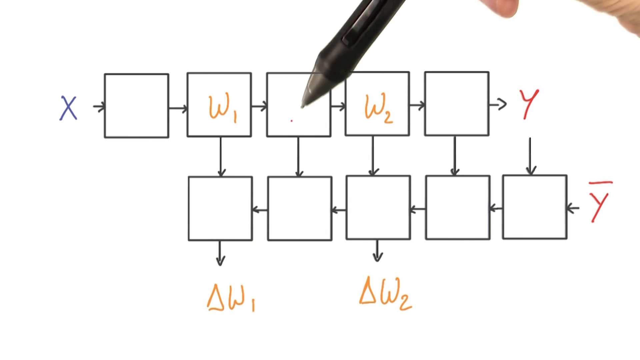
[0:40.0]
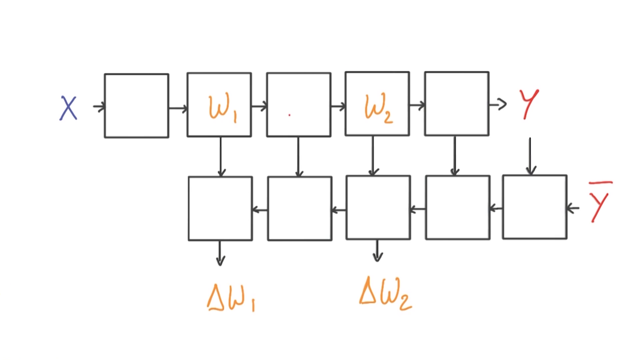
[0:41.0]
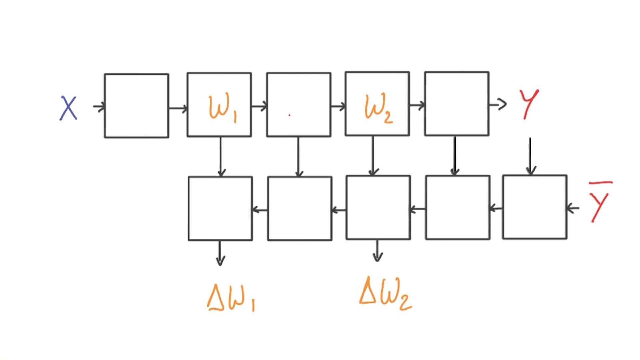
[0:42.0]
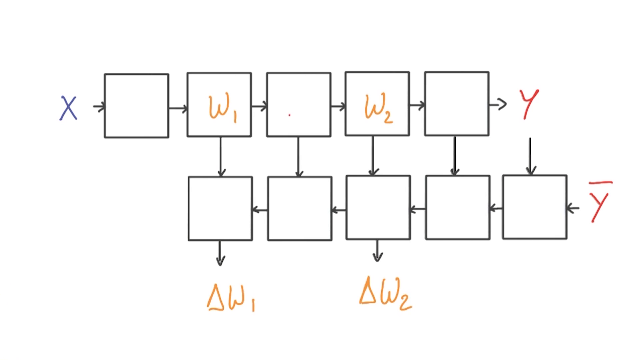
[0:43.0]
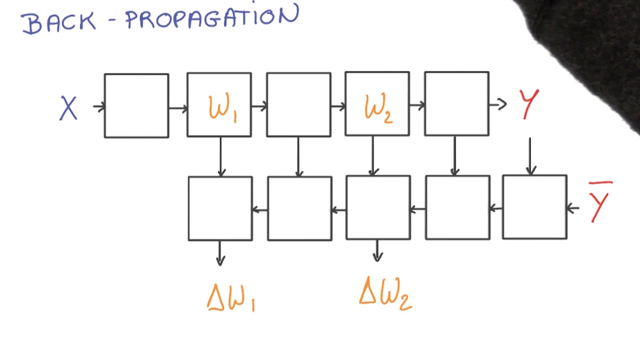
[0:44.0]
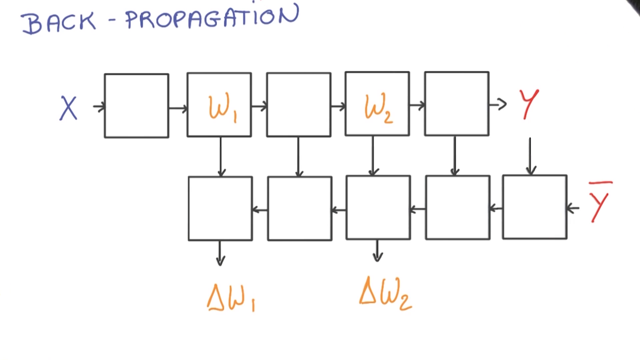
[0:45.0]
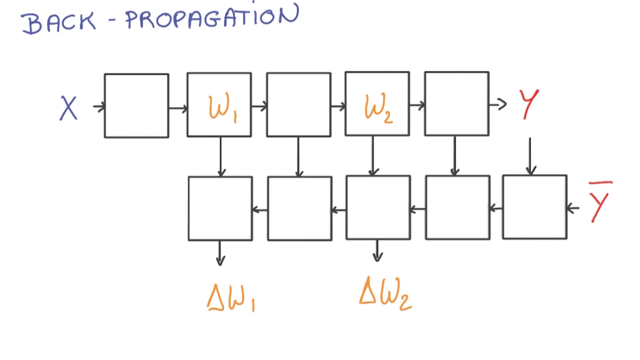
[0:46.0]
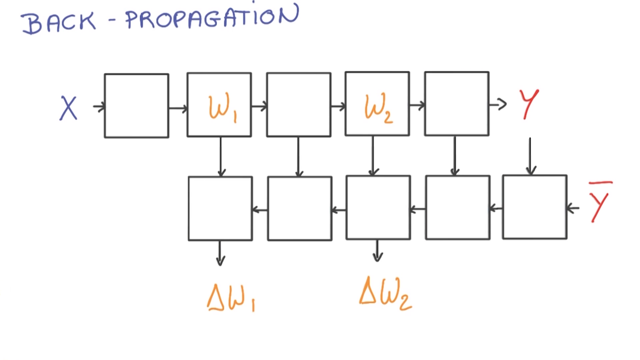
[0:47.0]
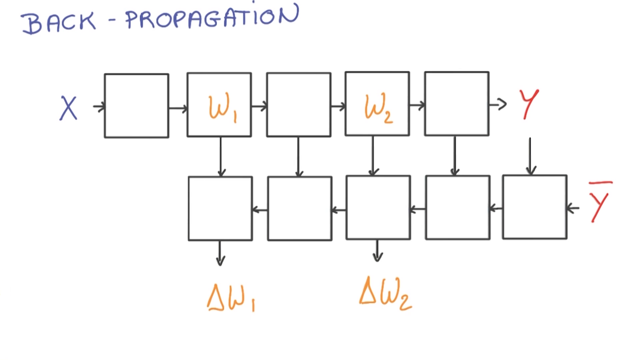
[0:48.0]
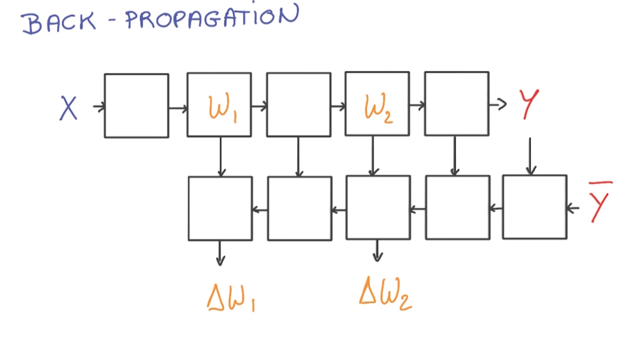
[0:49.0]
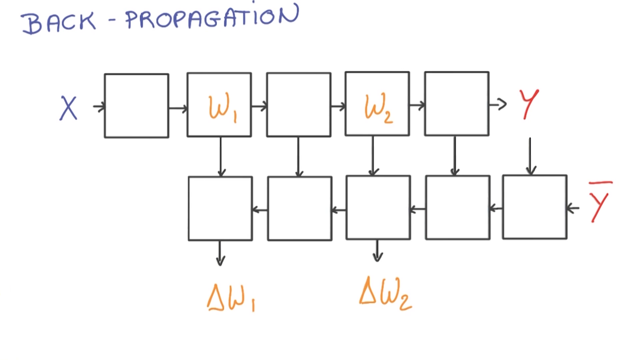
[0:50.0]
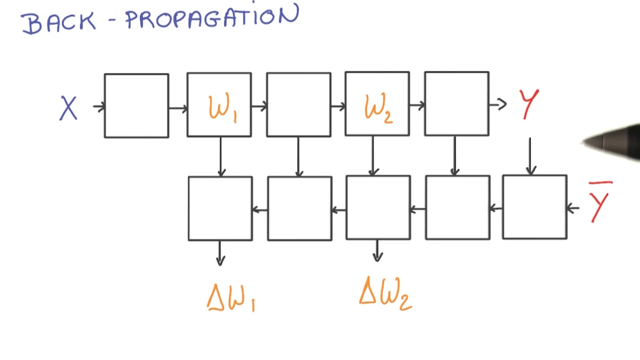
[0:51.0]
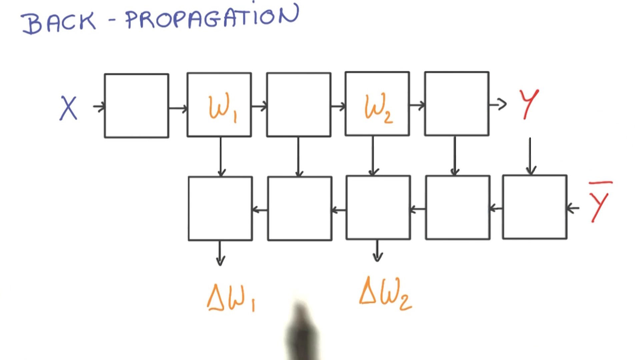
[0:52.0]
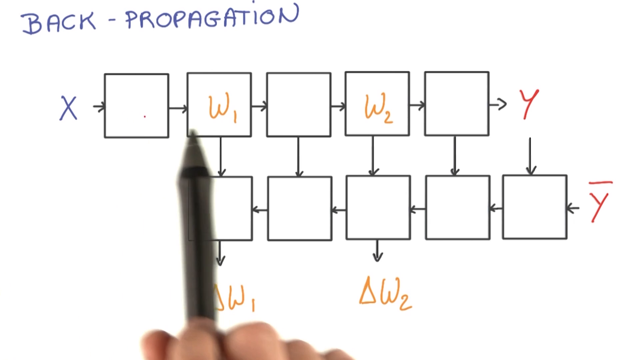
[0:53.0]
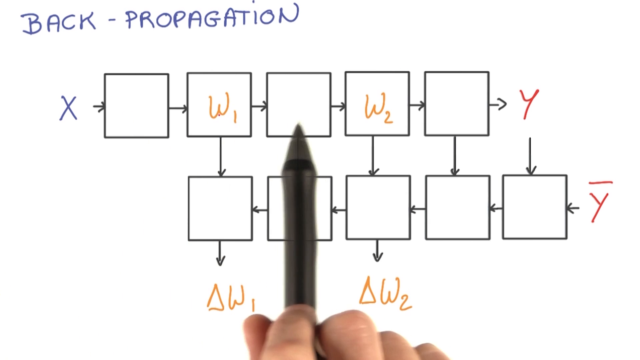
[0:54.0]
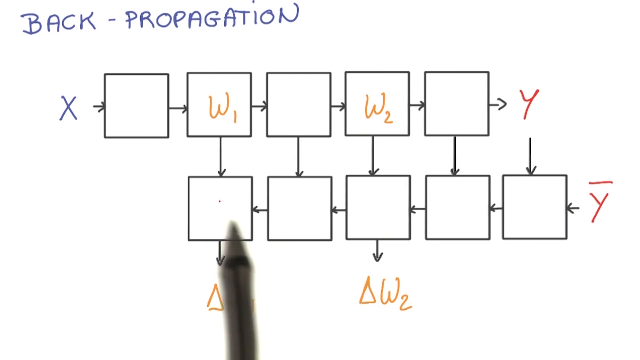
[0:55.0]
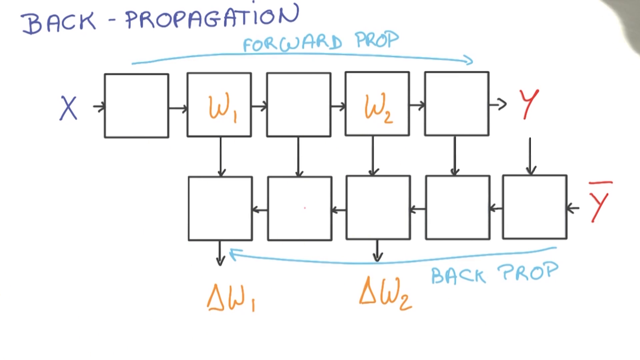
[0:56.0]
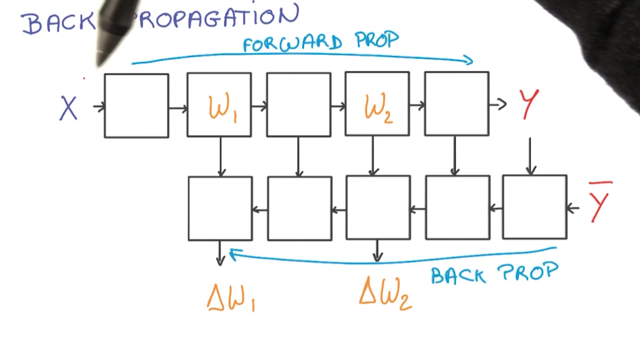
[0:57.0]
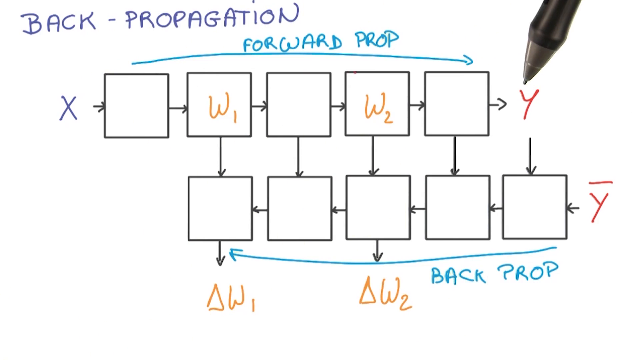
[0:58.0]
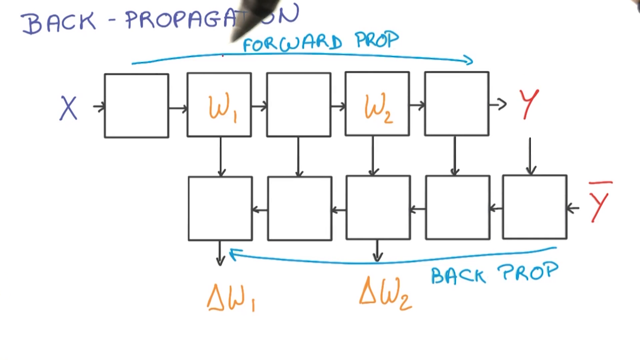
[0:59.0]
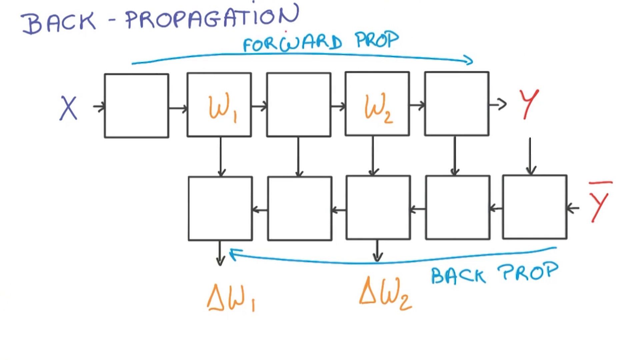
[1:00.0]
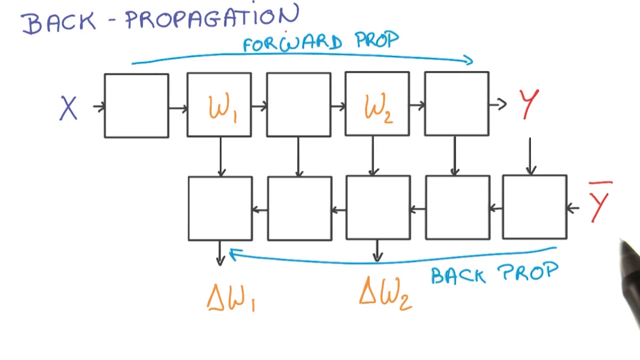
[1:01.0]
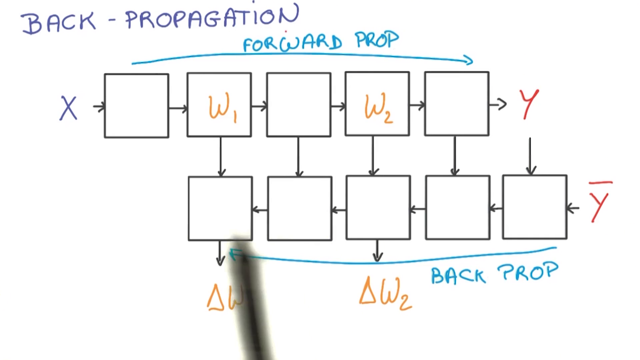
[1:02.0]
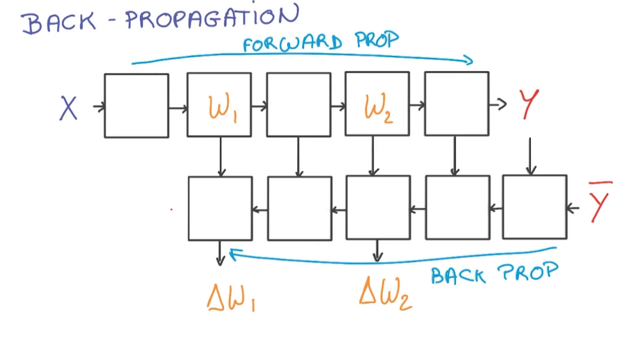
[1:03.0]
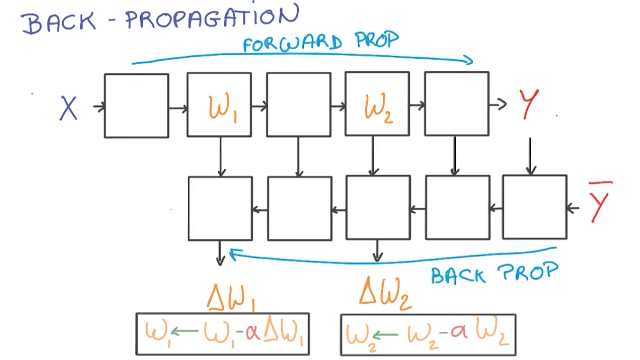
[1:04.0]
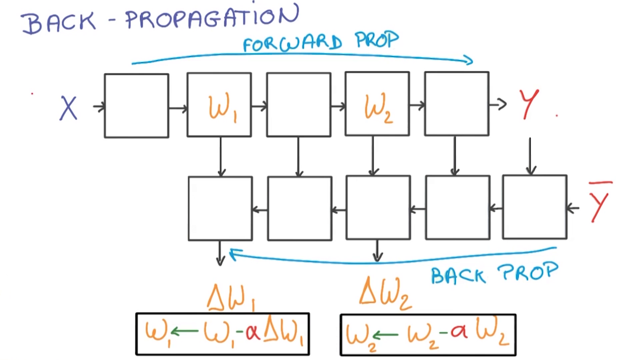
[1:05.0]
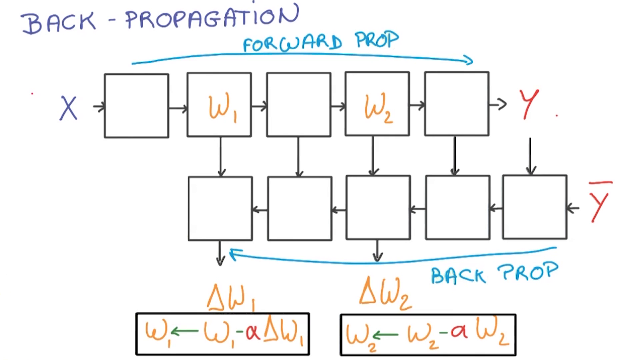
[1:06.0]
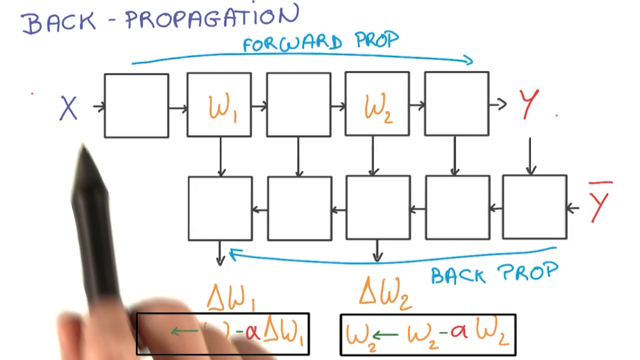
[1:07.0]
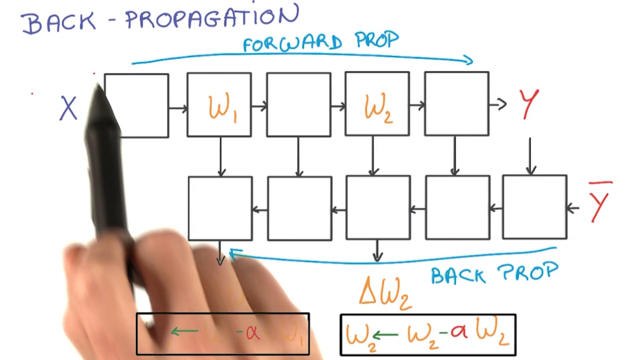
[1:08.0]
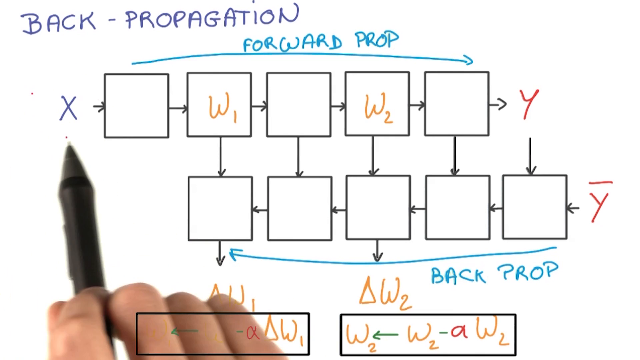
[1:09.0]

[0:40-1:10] The same drawing remains on screen as the hand of the person behind the camera moves. Text in blue letters is added in the upper left corner of the screen, reading "back propagation". The person shows where the information in the blocks goes and in what order, labeling the processes by name: forward prop, going from X to Y along the upper side, and back prop, going from the Y negative toward the left side, opposite to the forward prop. This is marked with a light blue color and an arrow showing the direction compared to the blocks on the upper side. Formulas with a black outline are then added.